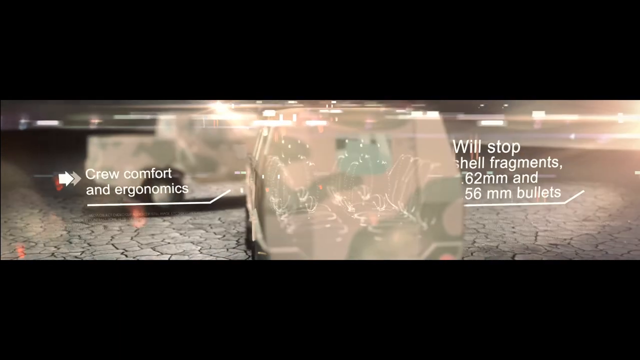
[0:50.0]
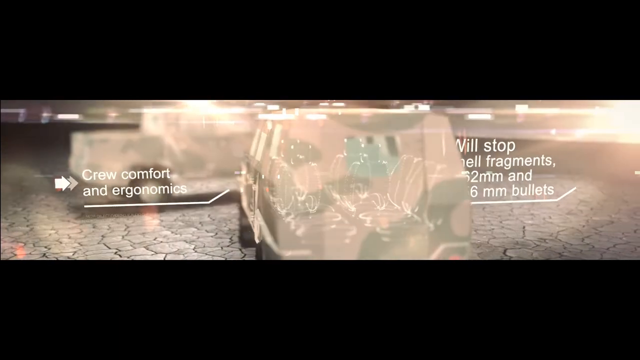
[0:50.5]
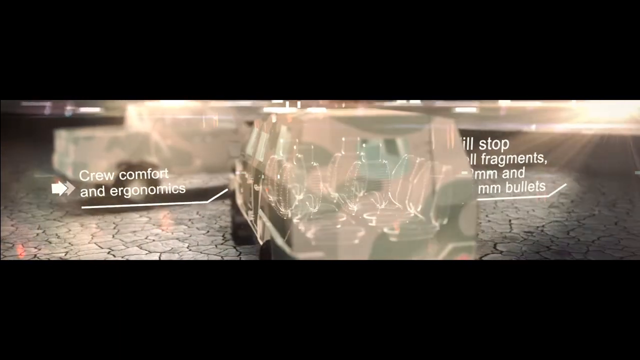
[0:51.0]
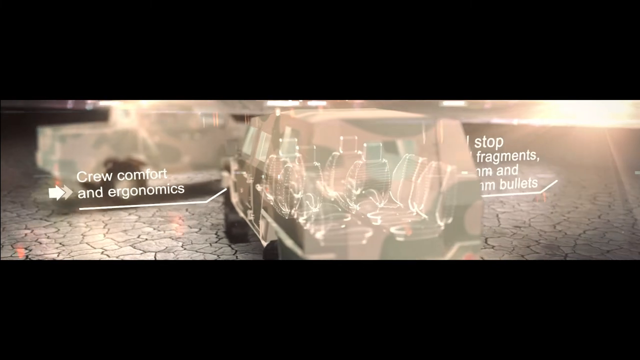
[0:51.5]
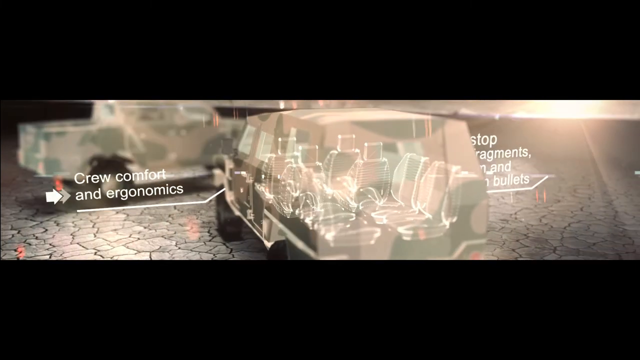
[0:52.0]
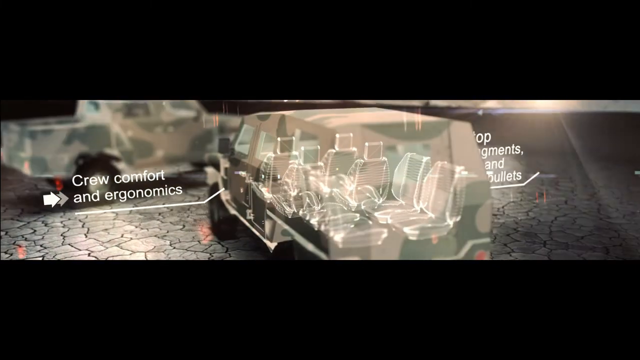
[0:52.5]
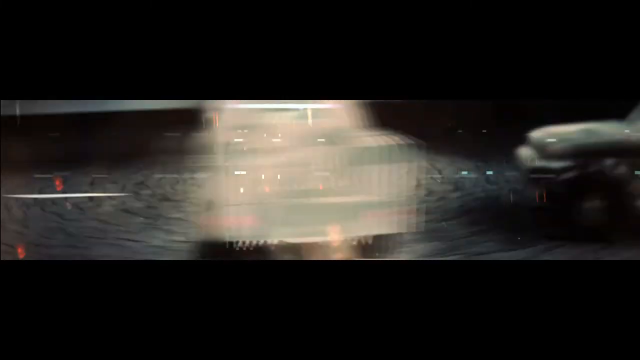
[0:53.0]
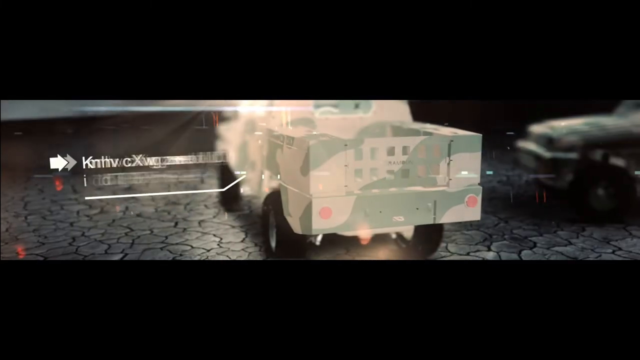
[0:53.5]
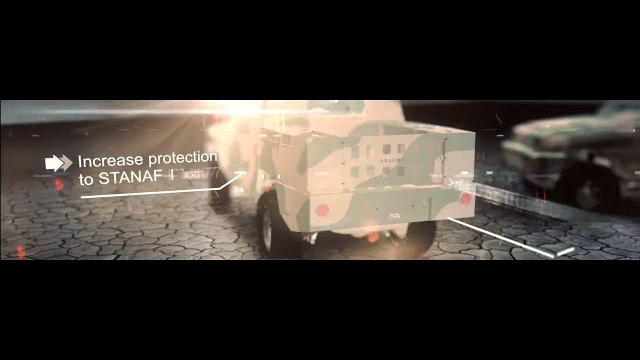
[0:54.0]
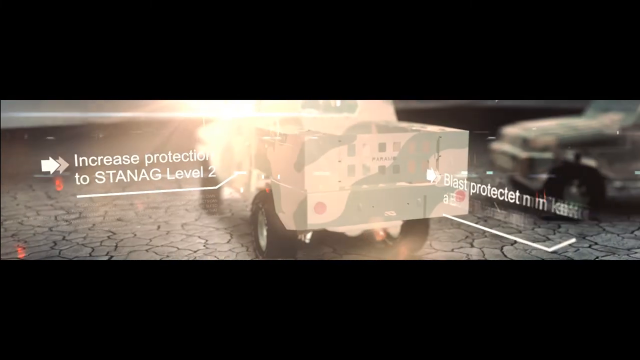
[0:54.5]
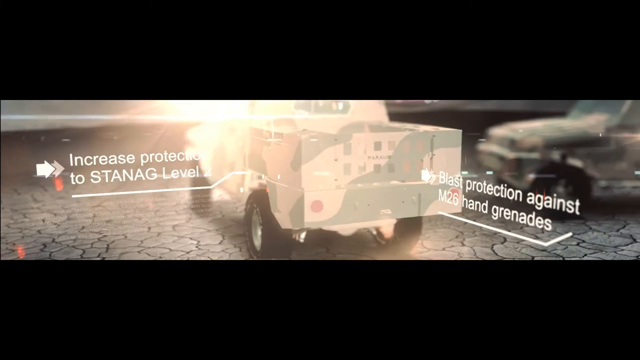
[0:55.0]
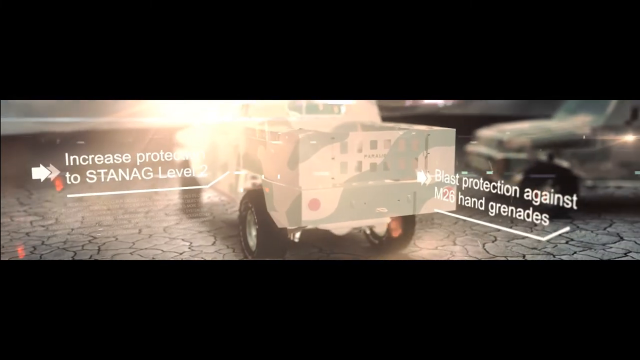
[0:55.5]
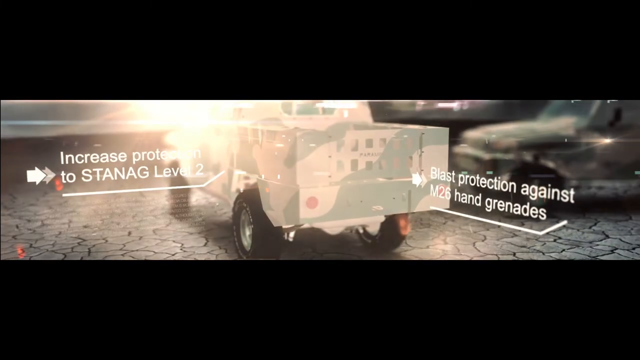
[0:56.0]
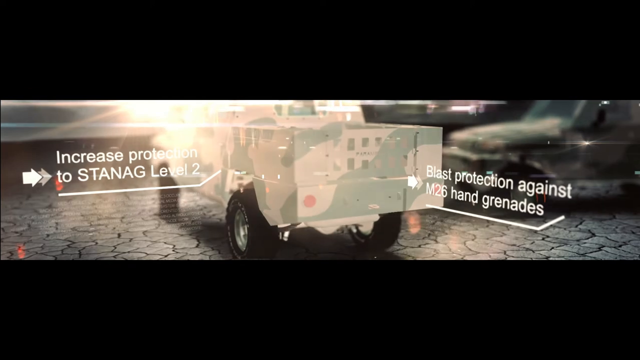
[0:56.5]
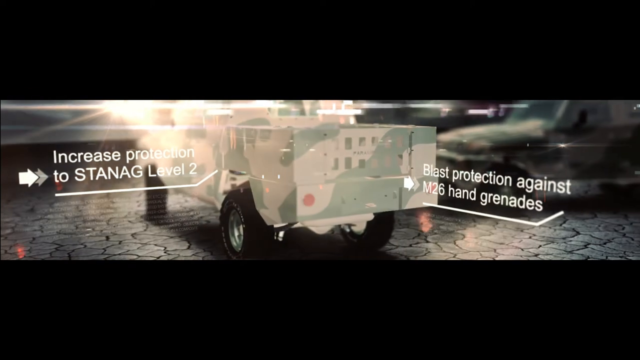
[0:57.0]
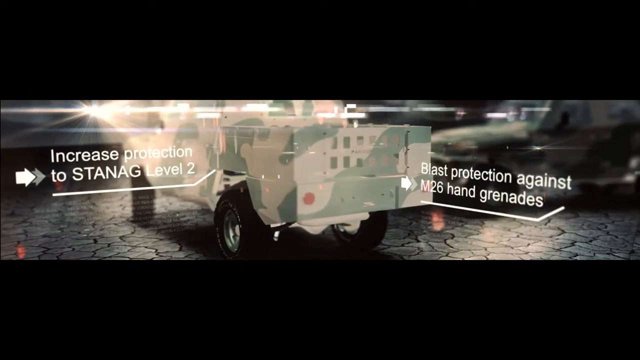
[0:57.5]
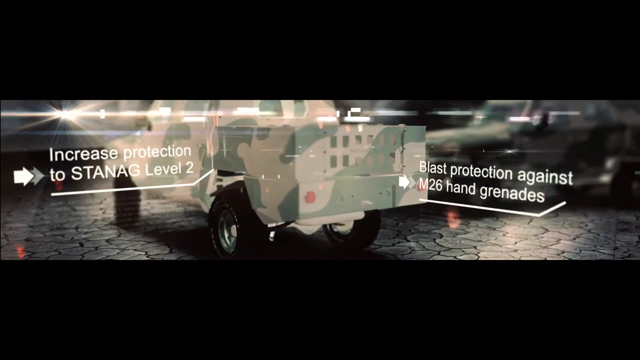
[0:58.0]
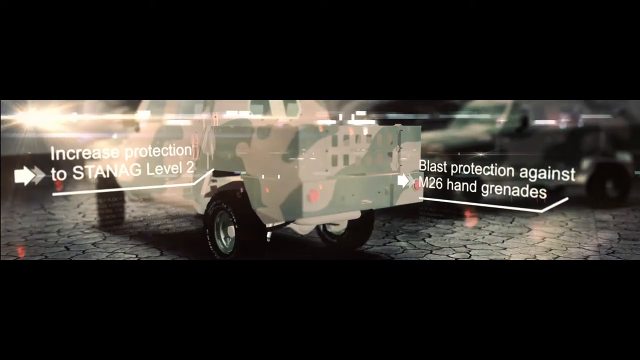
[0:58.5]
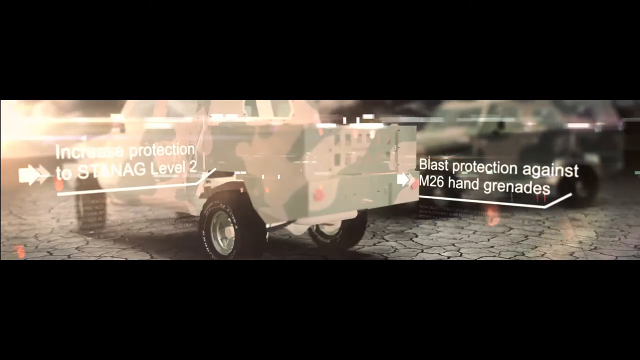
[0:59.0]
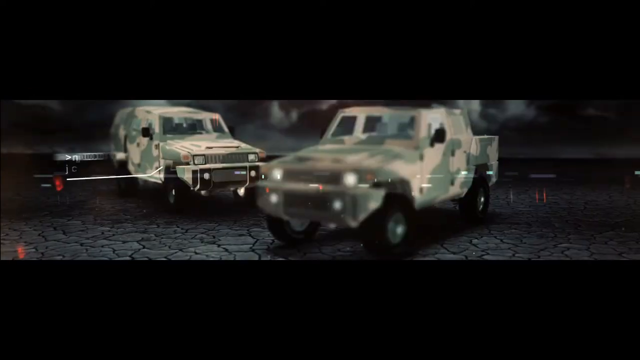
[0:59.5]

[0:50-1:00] The text "crew comfort and ergonomics" is on screen. The view then moves to the back side of a truck version of the vehicle, which looks more like a truck, with the text "increase protection to standard level 2" and "blast protection against M26 hand grenades." Text beginning "available in" then appears, but it is cut off.